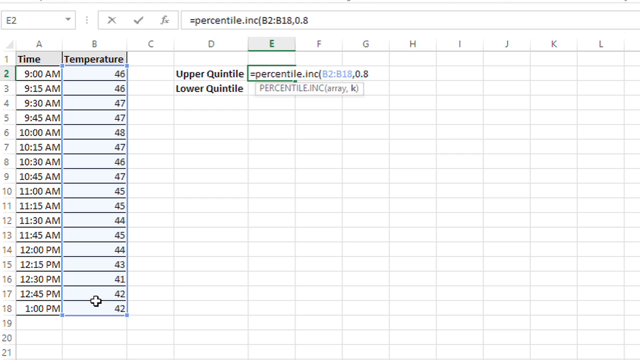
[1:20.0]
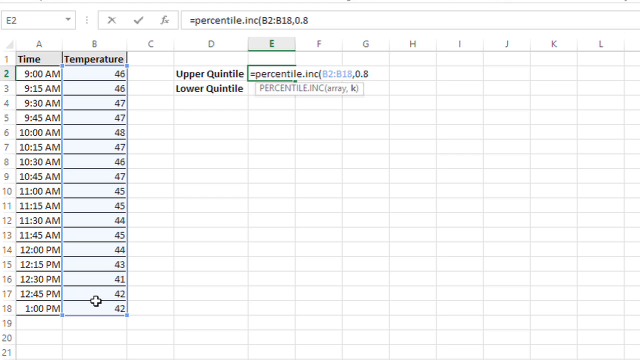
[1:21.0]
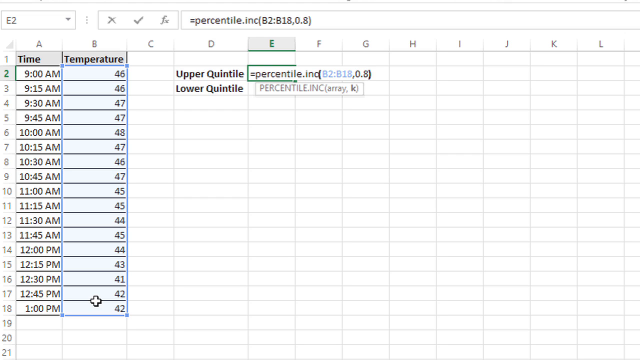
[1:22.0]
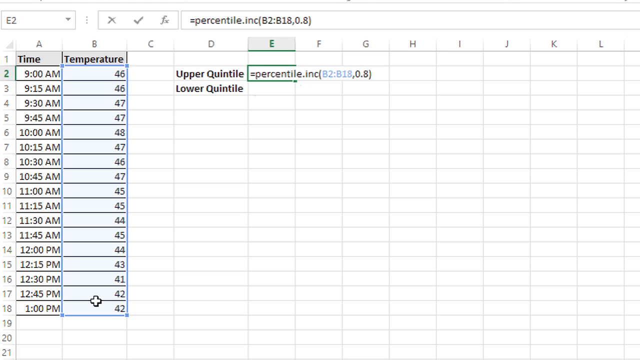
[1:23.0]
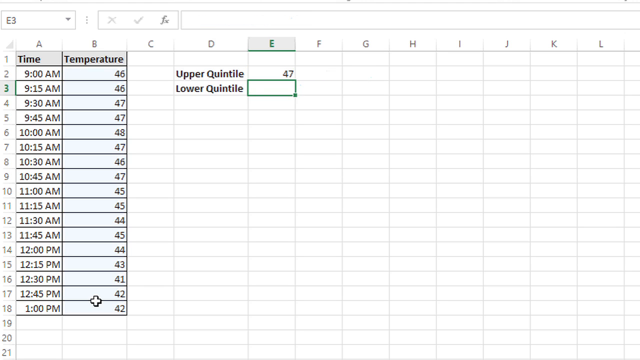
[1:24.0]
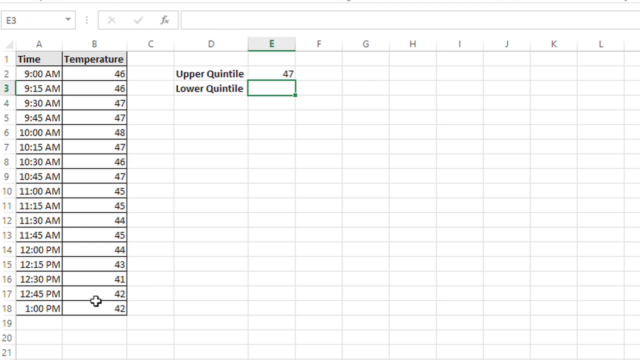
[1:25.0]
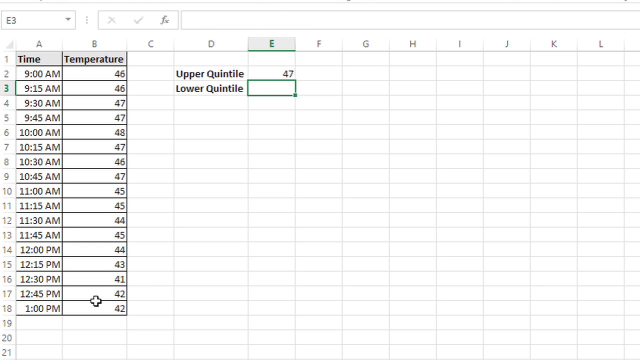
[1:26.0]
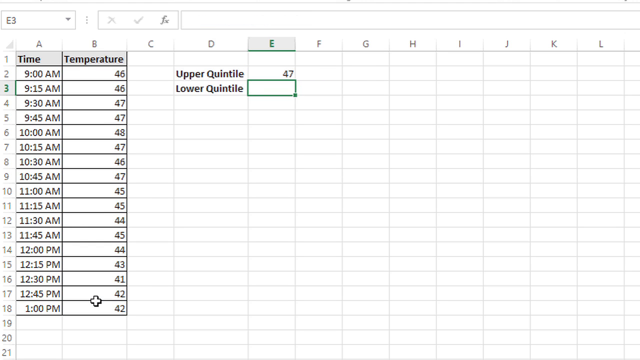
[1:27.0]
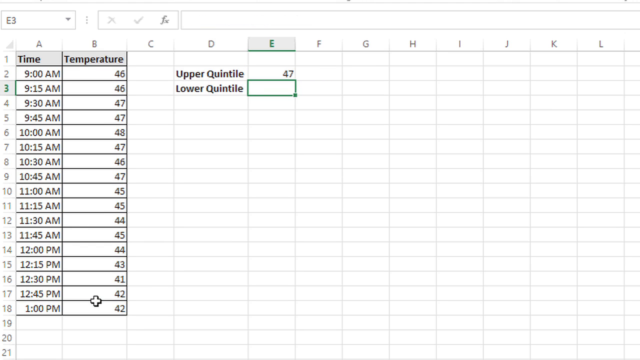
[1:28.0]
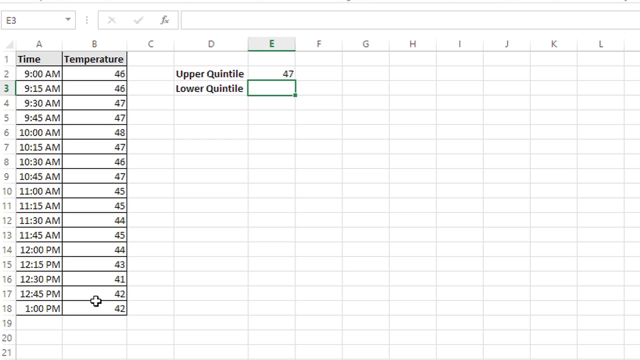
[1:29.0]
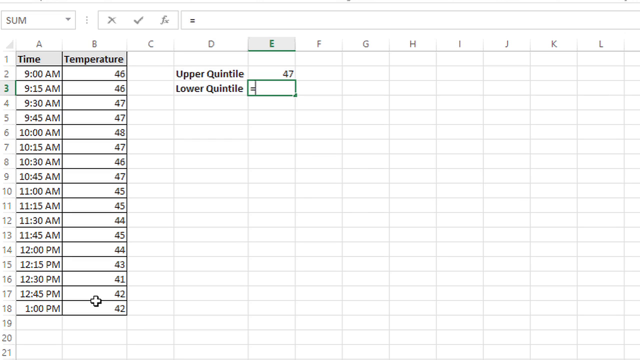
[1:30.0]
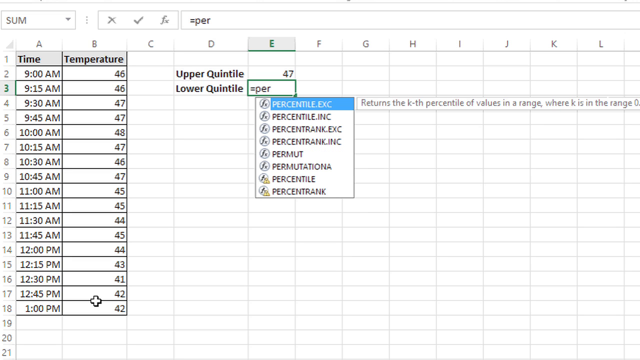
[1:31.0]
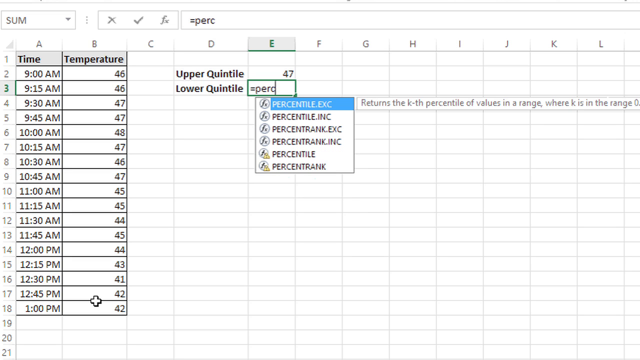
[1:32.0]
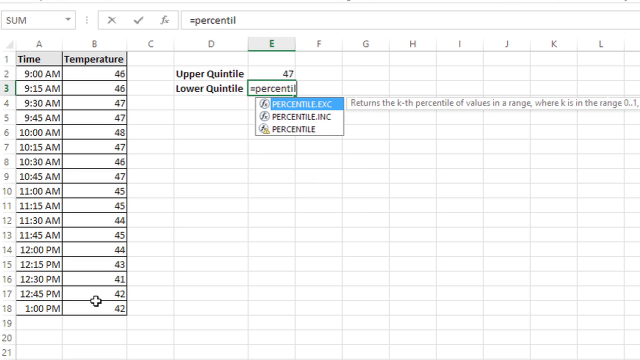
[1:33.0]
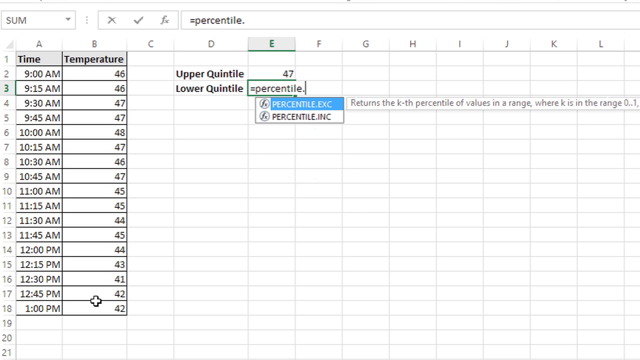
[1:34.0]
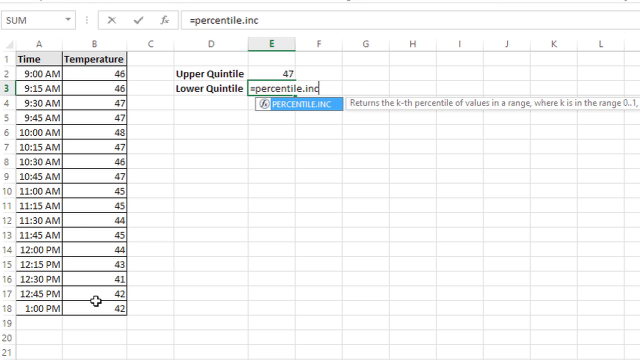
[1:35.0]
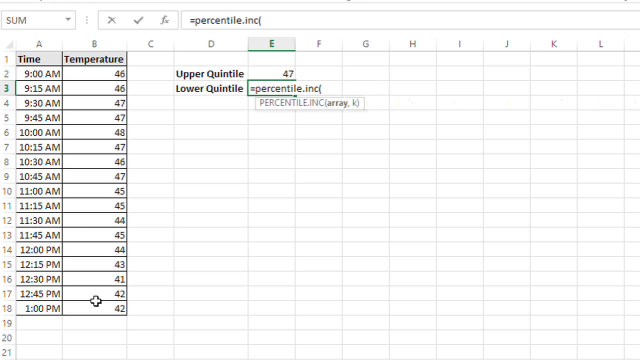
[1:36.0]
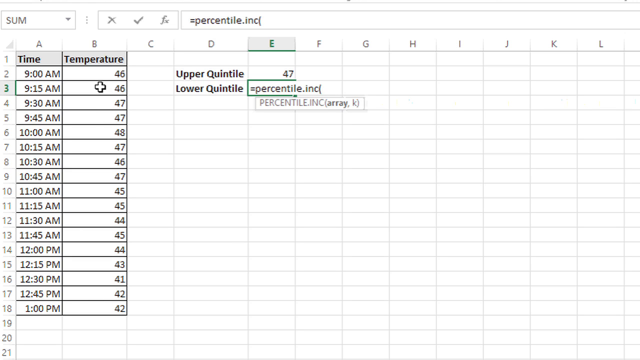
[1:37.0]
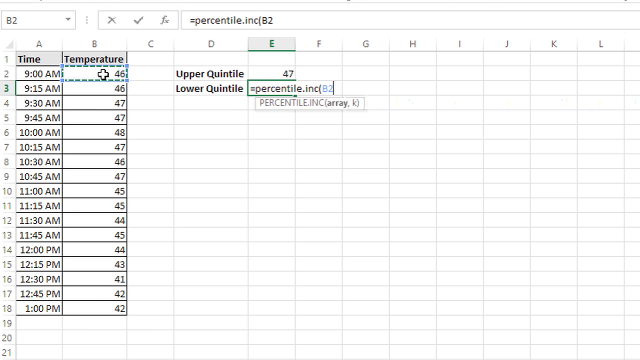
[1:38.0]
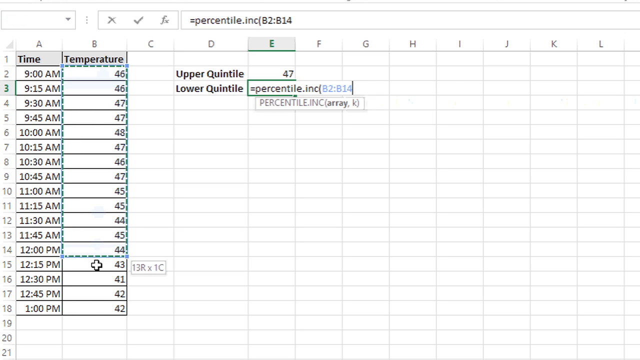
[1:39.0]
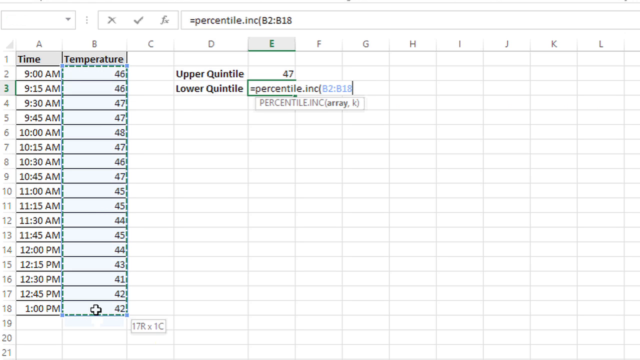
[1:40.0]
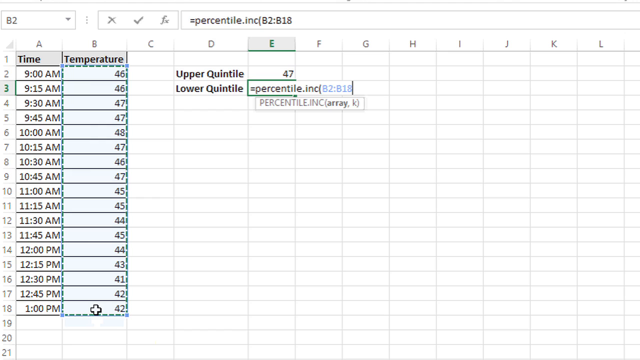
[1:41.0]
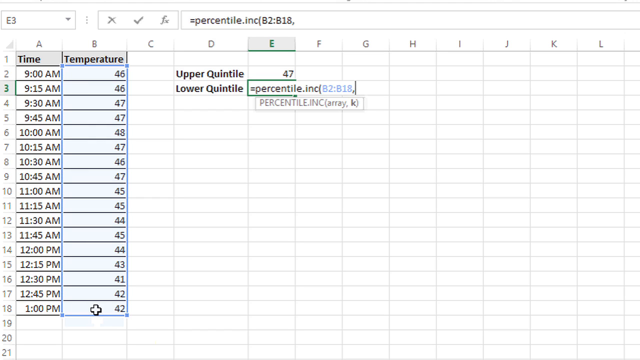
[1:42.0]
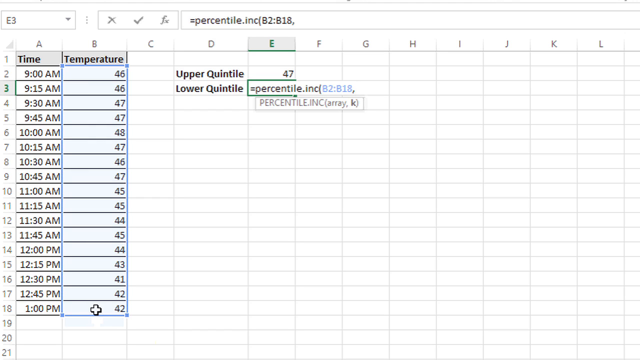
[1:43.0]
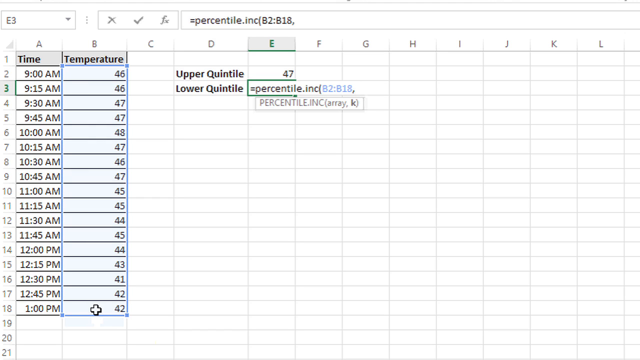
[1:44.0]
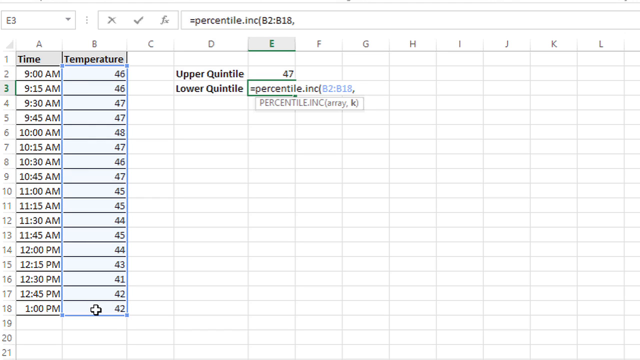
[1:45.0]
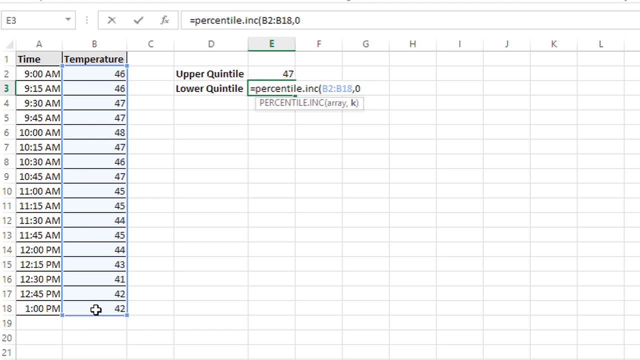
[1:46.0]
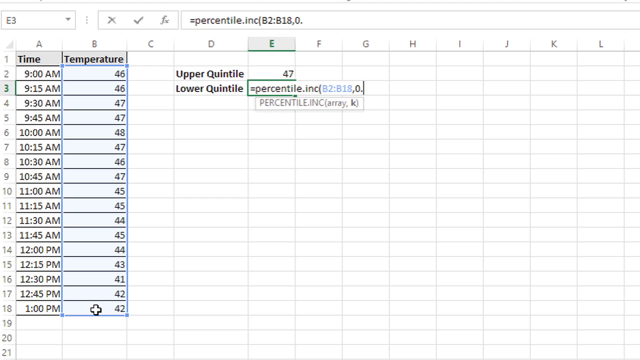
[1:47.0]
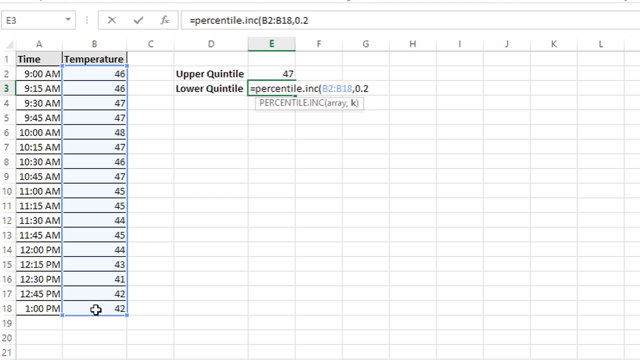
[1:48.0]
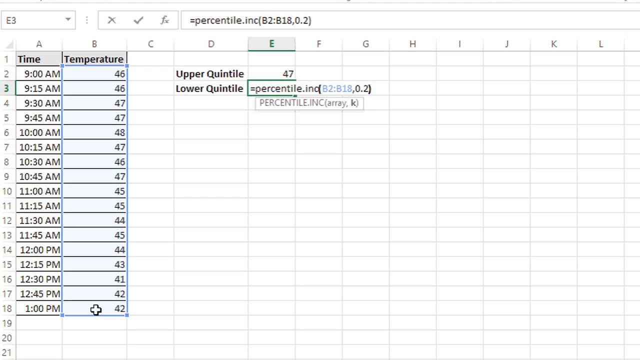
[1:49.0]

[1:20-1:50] Someone's screen recording shows a Microsoft Excel spreadsheet with two columns of data: column A, labeled "time" in row 1, lists multiple times, and column B, labeled "temperature" in row 1, lists what are presumably temperatures, all starting with the number 4. Column D reads "upper quintile" in row 2 and "lower quintile" in row 3. In column E, row 2, the formula reads "=percentile.INC(B2:B18,0.8)" once the closing parenthesis is added, and the cell shows 47 as the result. The user then clicks the cell in column E, row 3, highlighting its edges in green, and types a formula; a drop box of suggestions appears underneath as they type "=percentile.INC(." They click column B, row 2, and drag the mouse down to row 18, which automatically fills in "B2:B18," then type a comma, 0.2 and a closing parenthesis. The program solves the formula, giving 43.2.